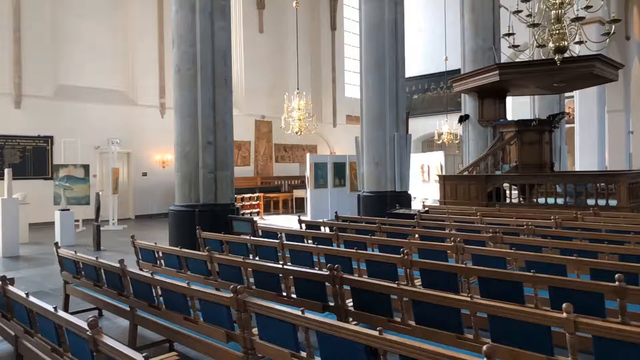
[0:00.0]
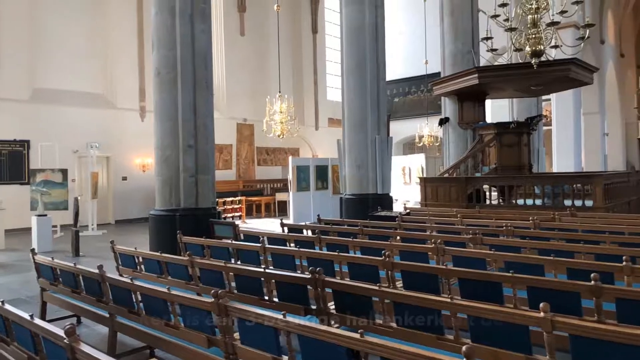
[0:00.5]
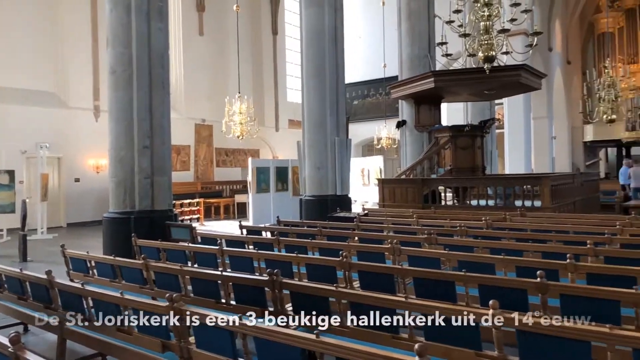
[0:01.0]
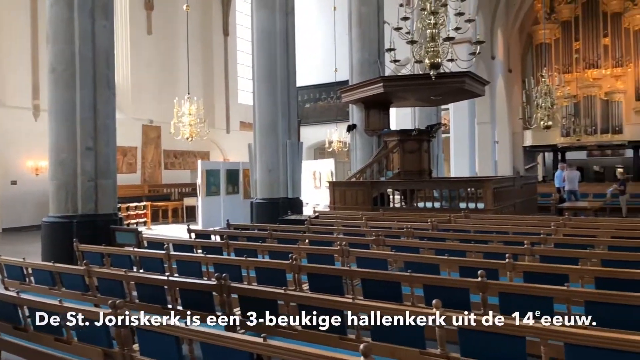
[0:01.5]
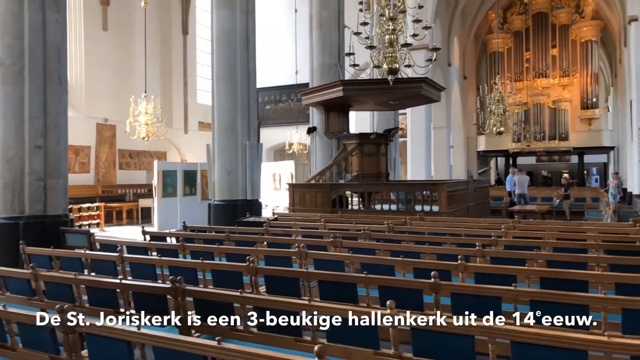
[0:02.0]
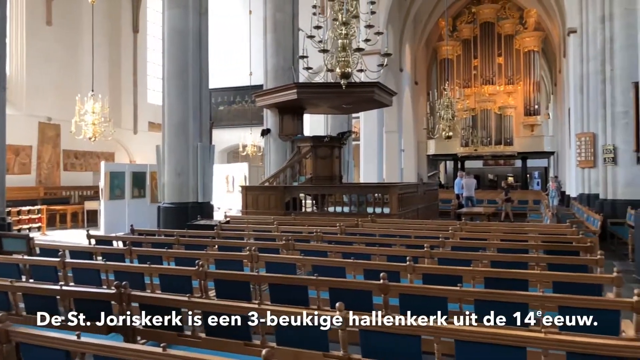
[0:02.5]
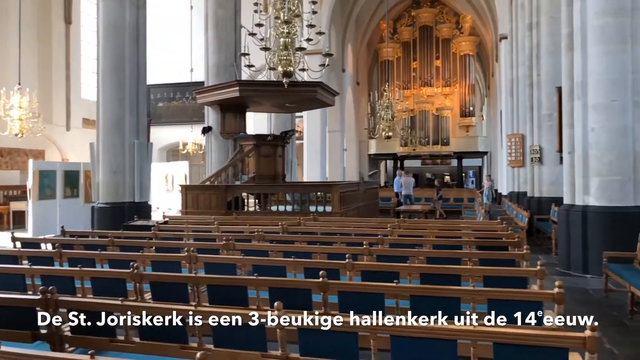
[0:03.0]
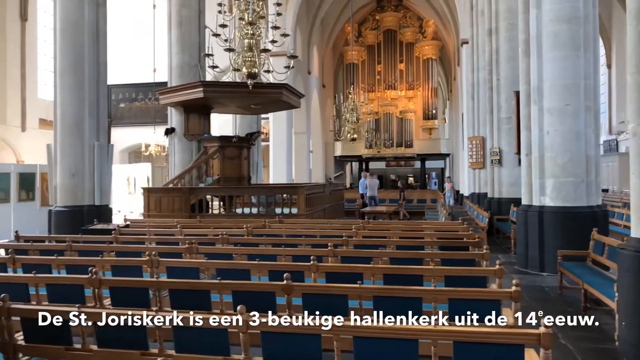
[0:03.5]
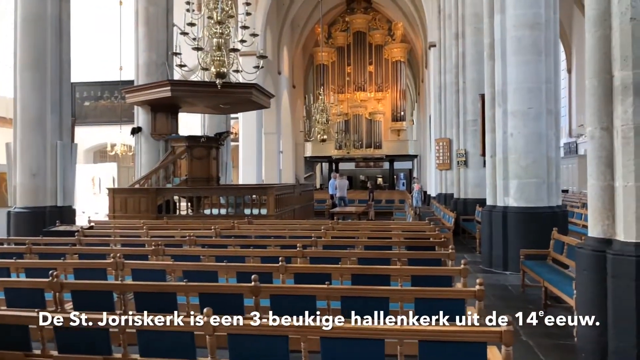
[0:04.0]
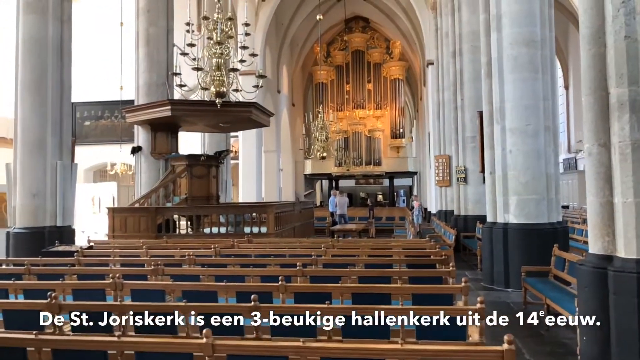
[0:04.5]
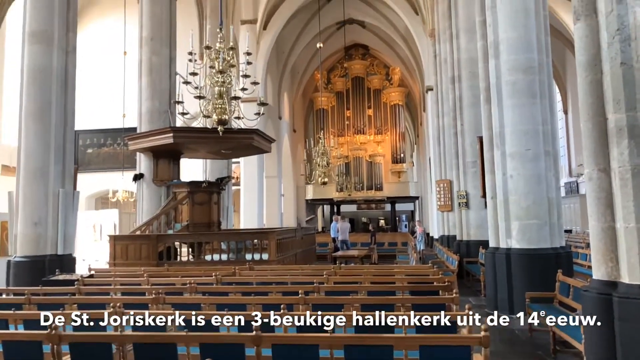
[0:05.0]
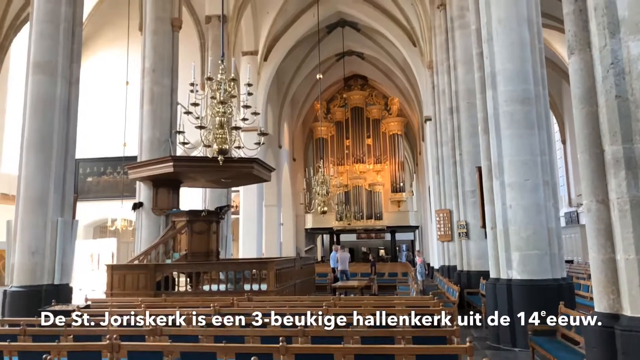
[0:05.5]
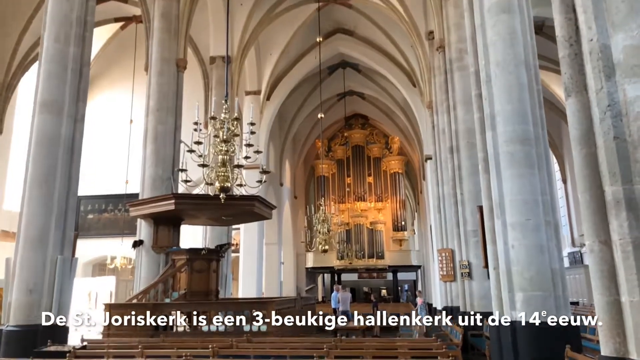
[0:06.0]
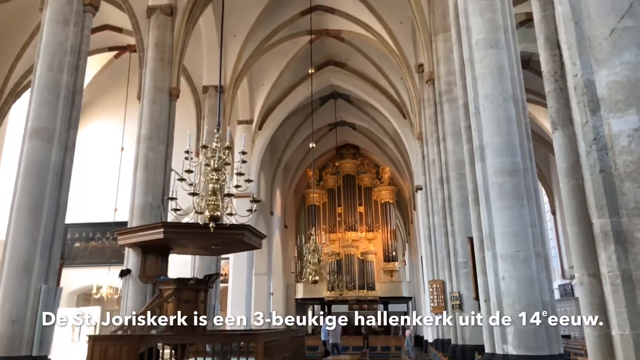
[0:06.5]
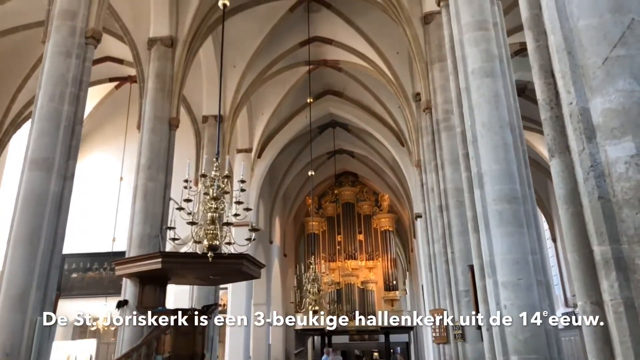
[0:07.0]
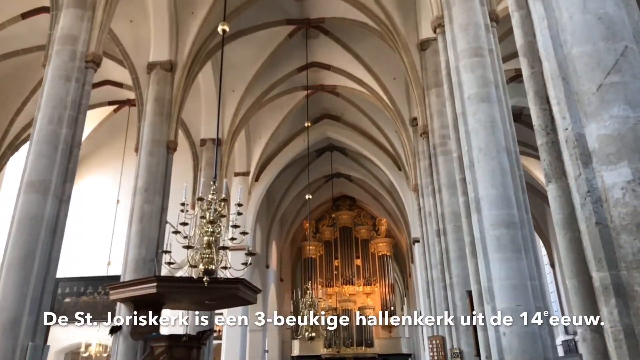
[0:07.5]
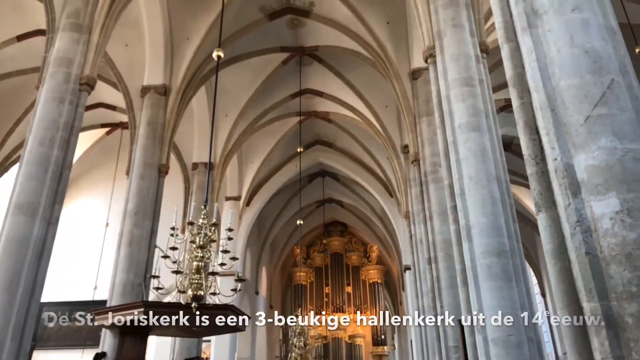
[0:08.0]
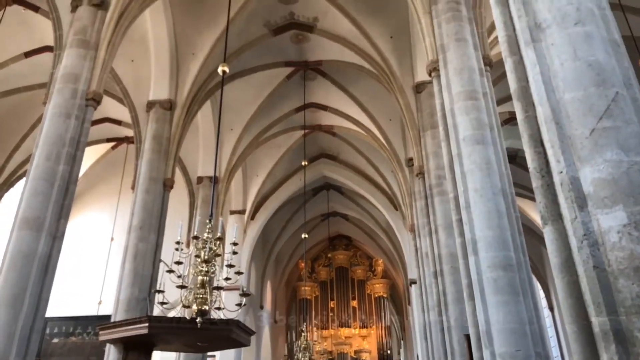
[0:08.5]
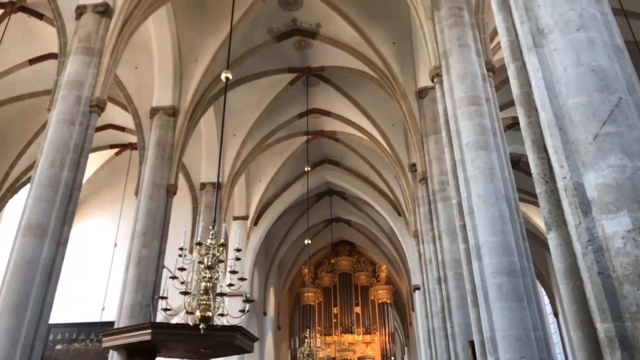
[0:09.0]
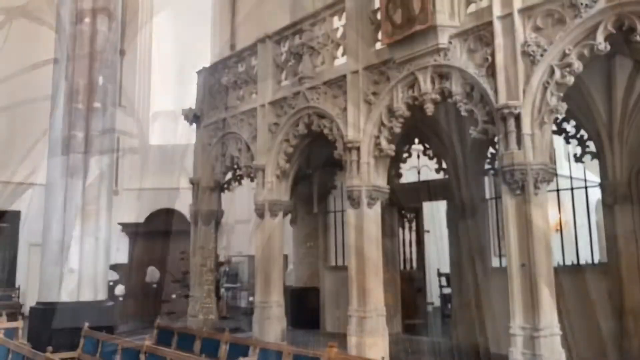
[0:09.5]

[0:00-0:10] The footage shows the inside of a large cathedral church. There are rows and rows of wooden pews whose backrests are rectangular in shape and dark blue. An elaborate chandelier with candles throughout hangs from the center. The cathedral ceiling has lots of arches, and huge columns on the left and right of the frame hold up the roof. There are people on the stage, maybe about two people standing.